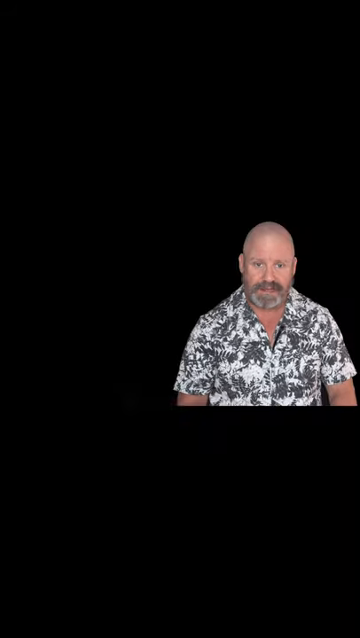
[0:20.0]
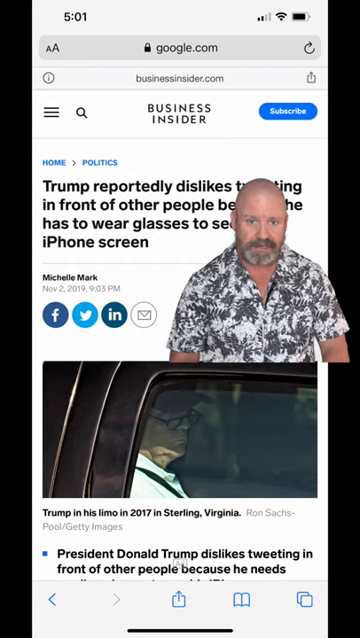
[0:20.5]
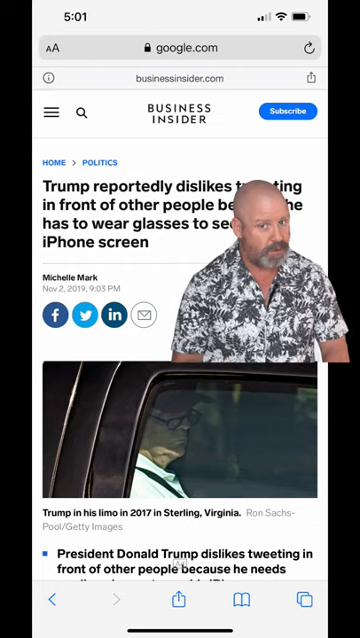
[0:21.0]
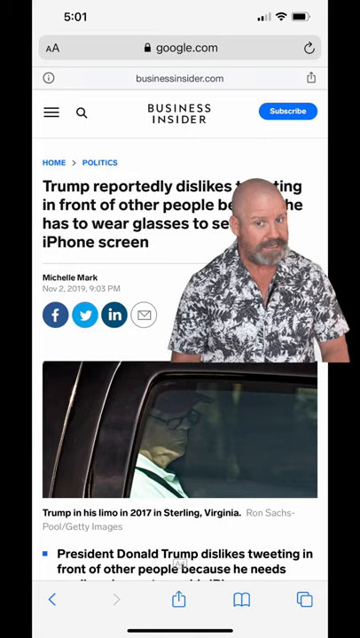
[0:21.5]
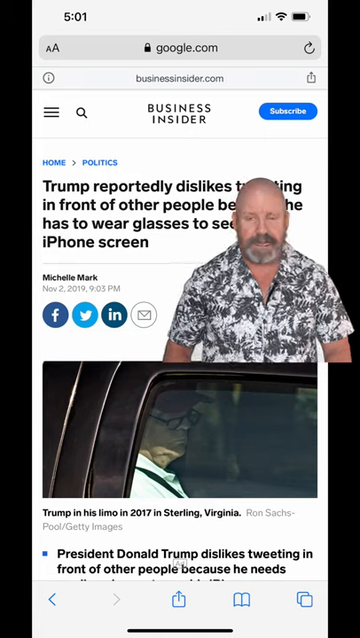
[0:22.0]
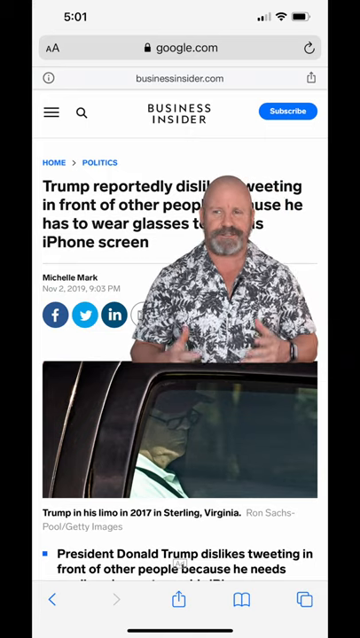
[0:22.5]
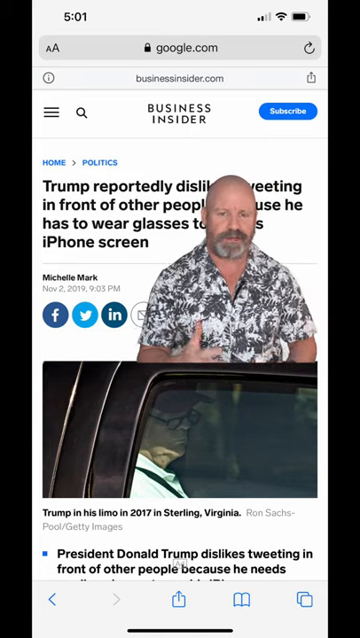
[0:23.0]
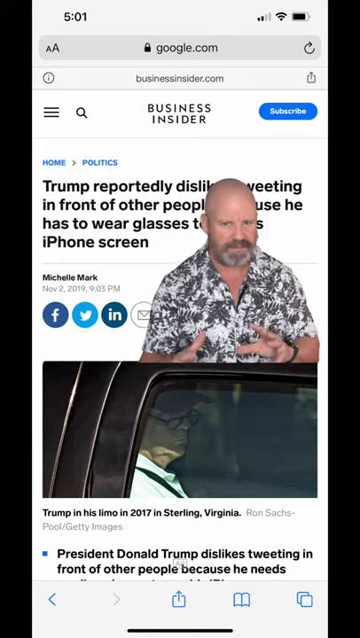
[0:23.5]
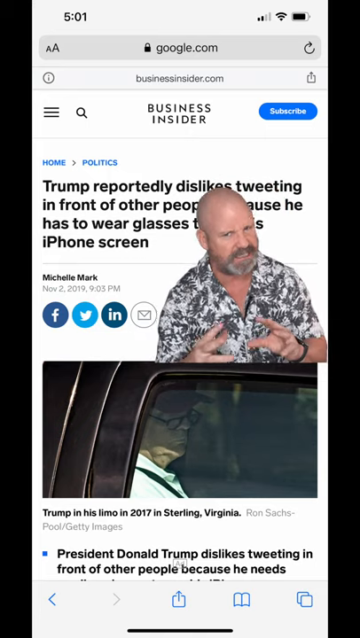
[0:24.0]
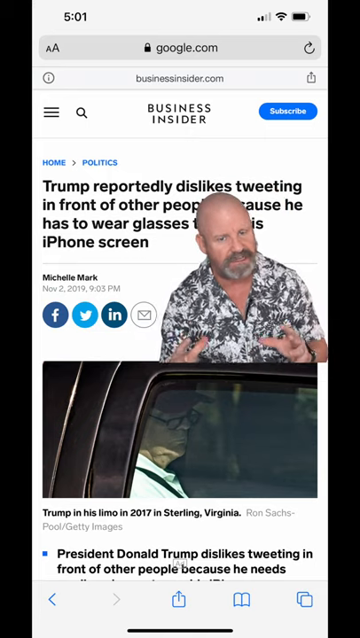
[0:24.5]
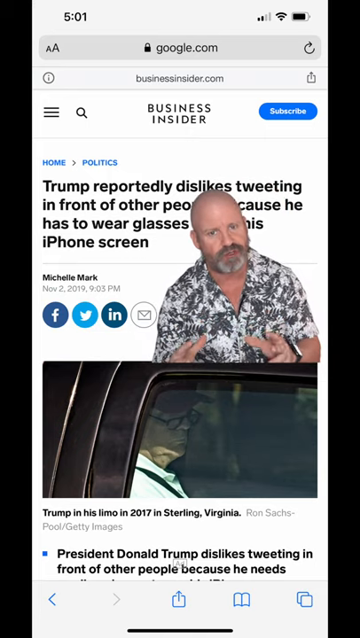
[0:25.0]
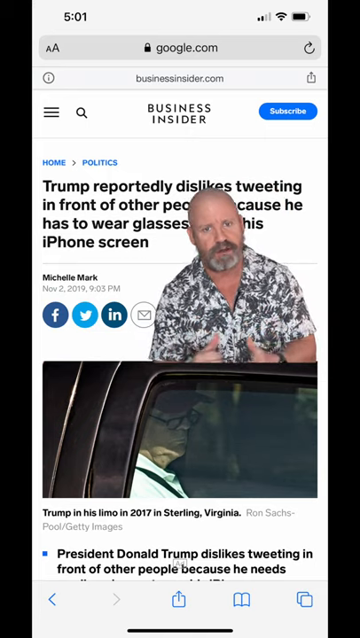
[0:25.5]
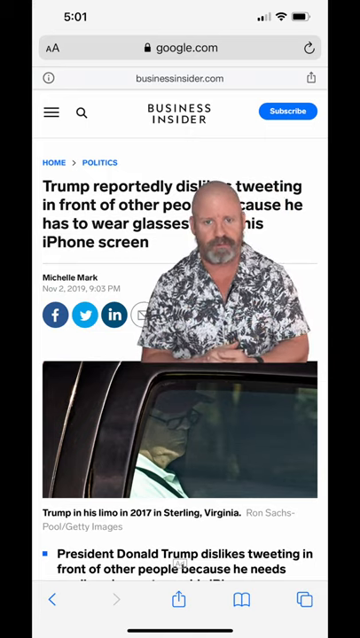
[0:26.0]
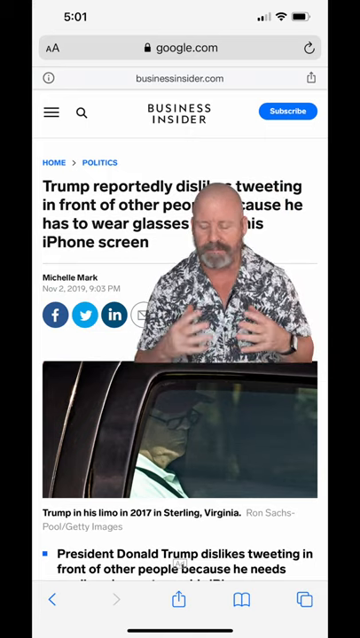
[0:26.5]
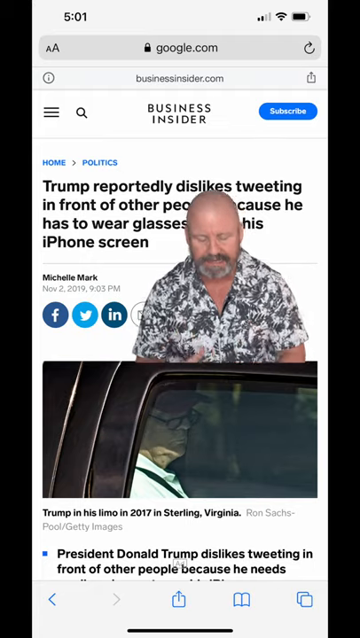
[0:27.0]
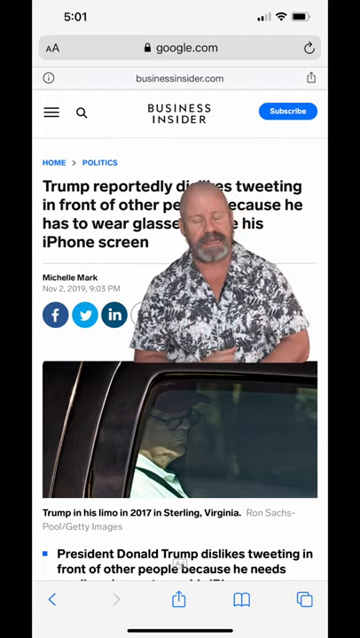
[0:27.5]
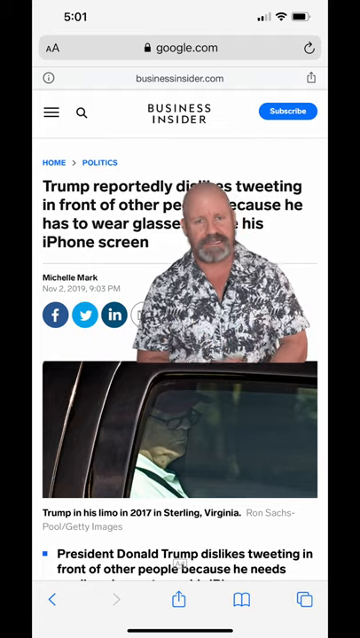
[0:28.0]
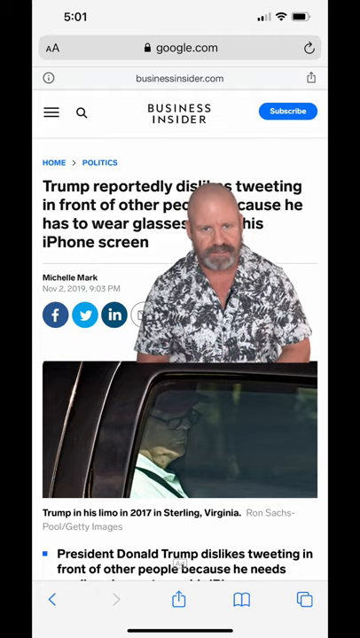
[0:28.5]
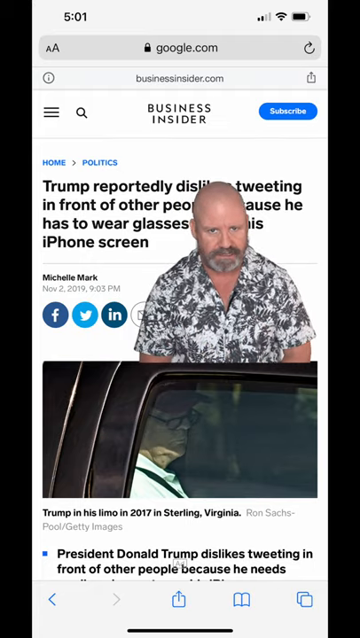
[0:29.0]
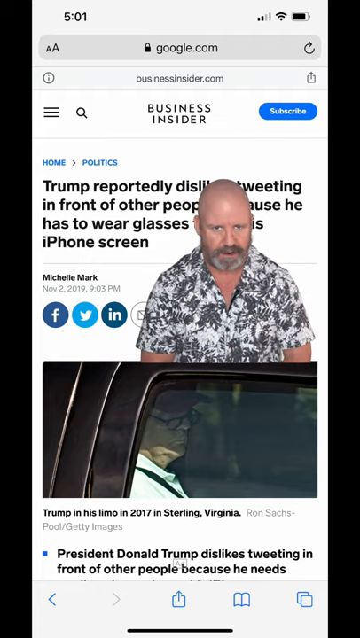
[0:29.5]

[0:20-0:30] The screen shows the article text about Trump not liking to tweet in front of other people because he has to wear glasses to see the screen. The man is superimposed on top of the article, talking with his hands, and wears a black watch. His name does not appear anywhere. He is superimposed above the picture of Donald Trump sitting in the limo with his glasses on. In the middle of the screen are symbols for Facebook, Twitter, Instagram and, apparently, email. At the top, the article is from the website "Business Insider", "businessinsider.com". The article is dated November, but the rest of the date is too blurry to read. Underneath the picture of Trump is a photo credit that appears to begin with the name "Ron" and ends with "/ Getty Images".